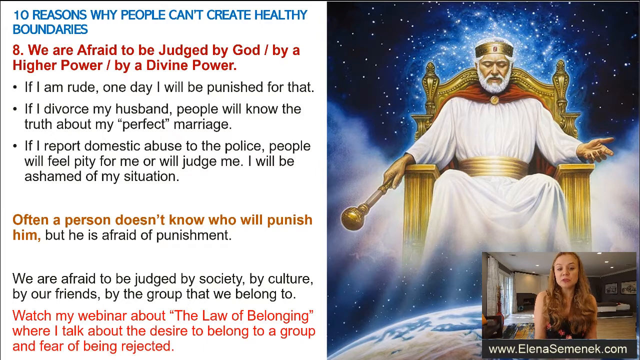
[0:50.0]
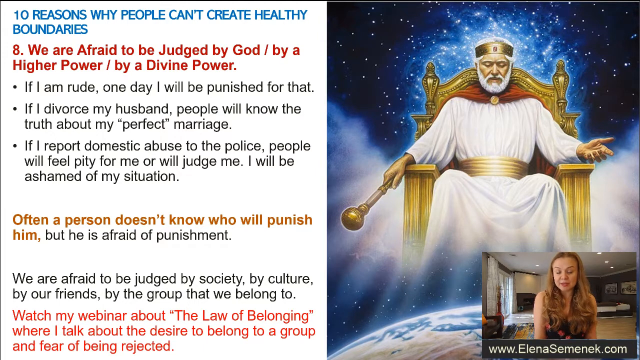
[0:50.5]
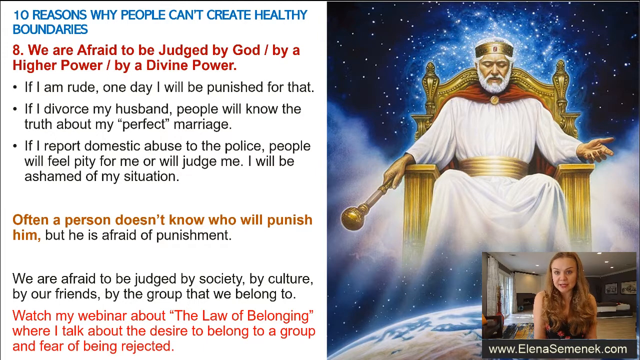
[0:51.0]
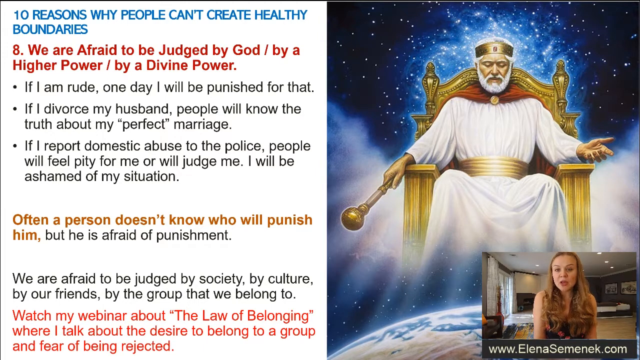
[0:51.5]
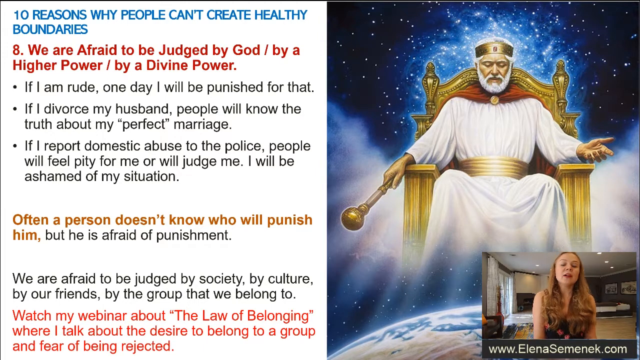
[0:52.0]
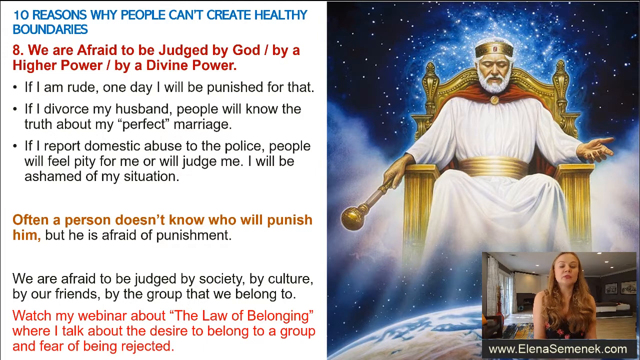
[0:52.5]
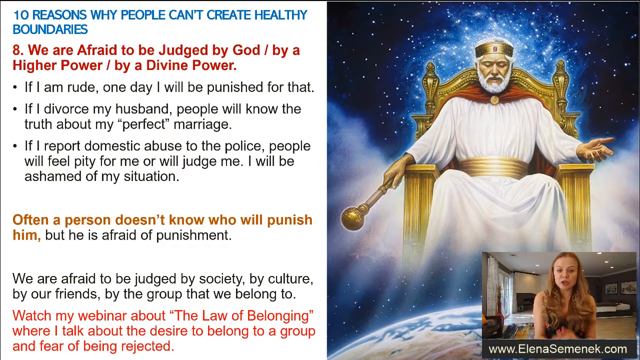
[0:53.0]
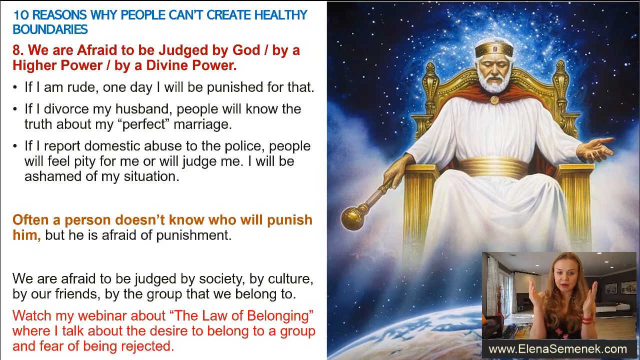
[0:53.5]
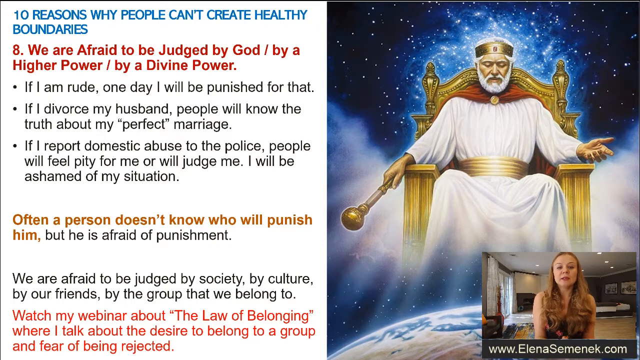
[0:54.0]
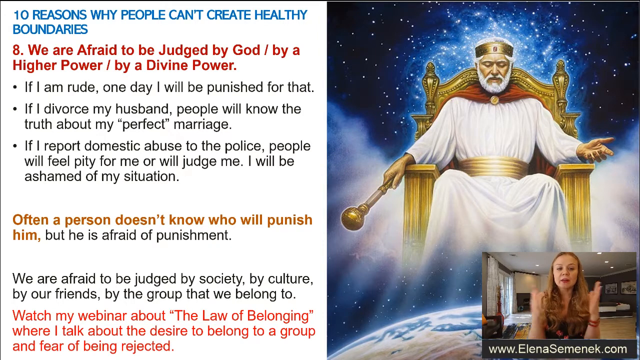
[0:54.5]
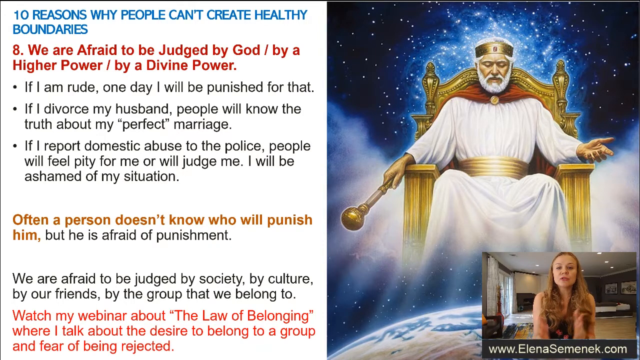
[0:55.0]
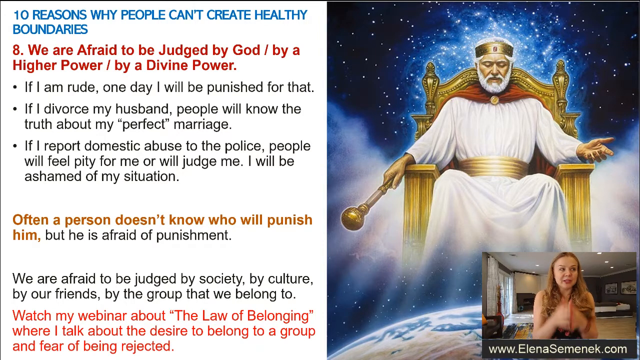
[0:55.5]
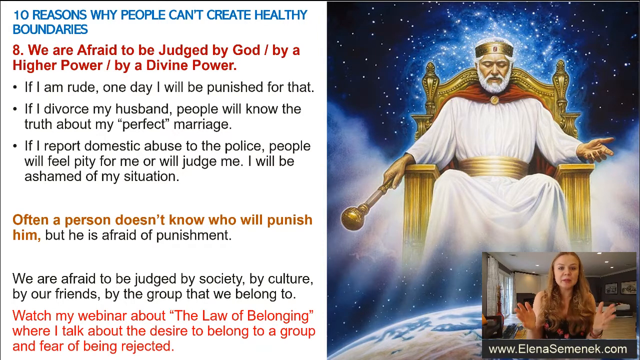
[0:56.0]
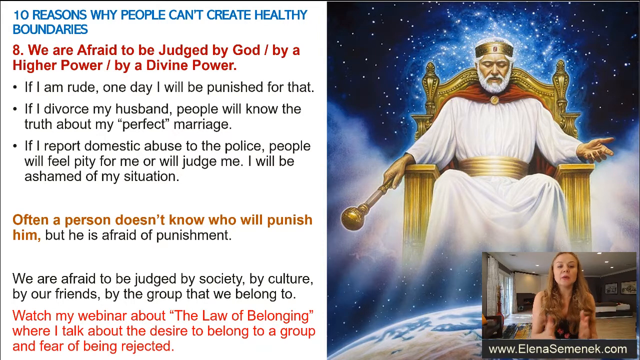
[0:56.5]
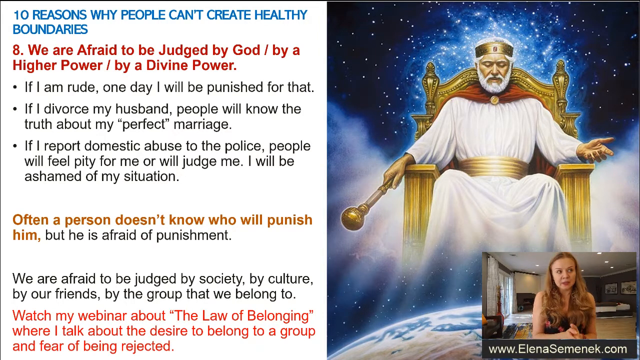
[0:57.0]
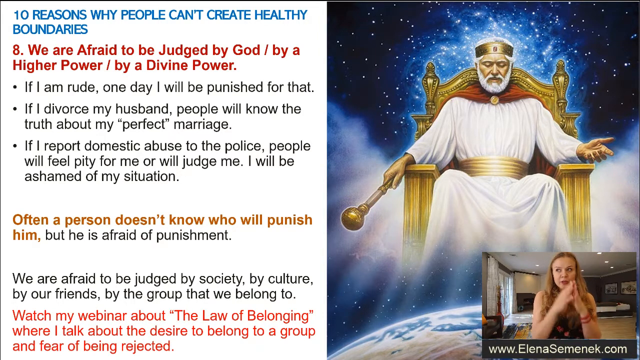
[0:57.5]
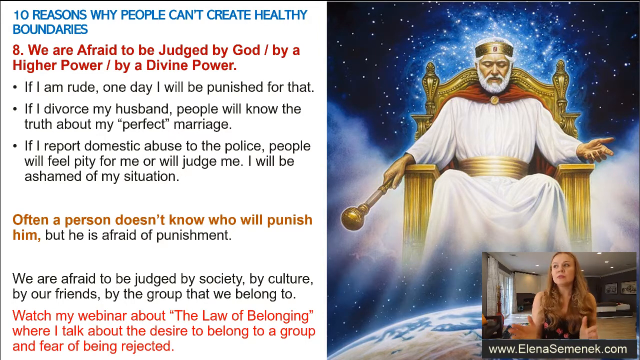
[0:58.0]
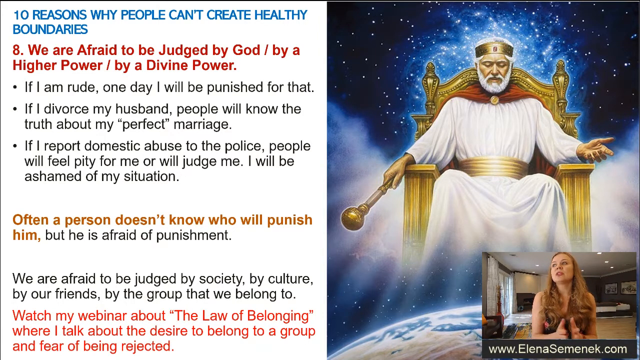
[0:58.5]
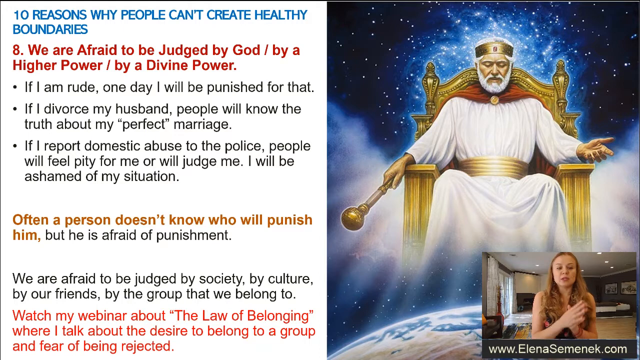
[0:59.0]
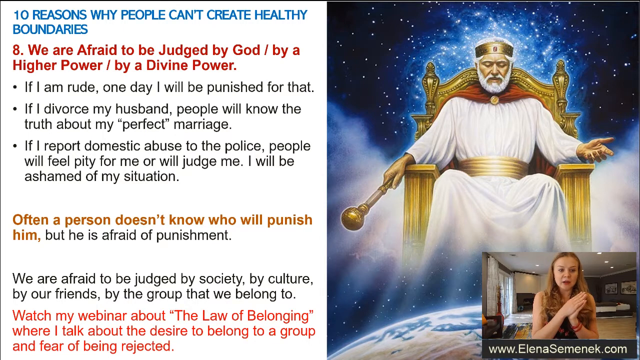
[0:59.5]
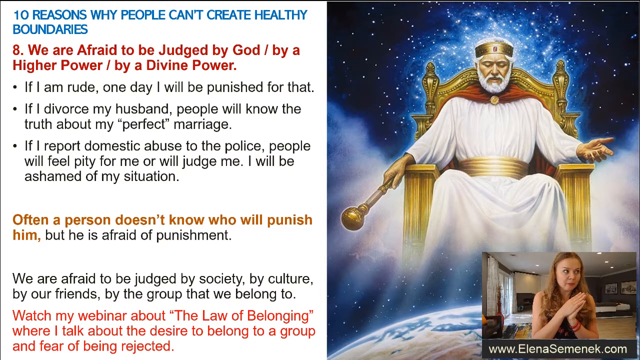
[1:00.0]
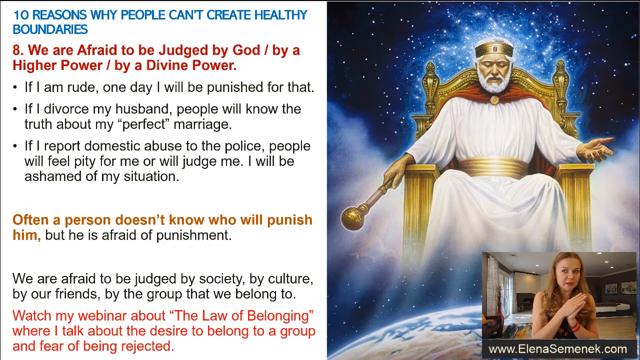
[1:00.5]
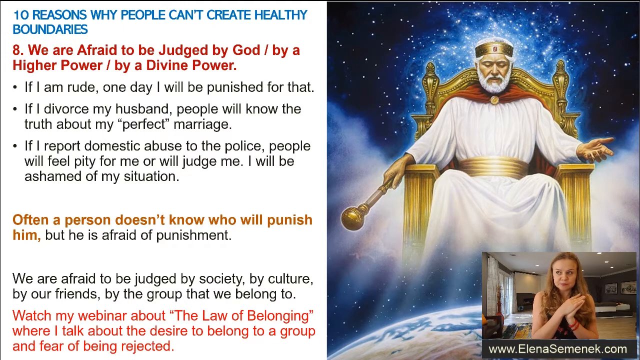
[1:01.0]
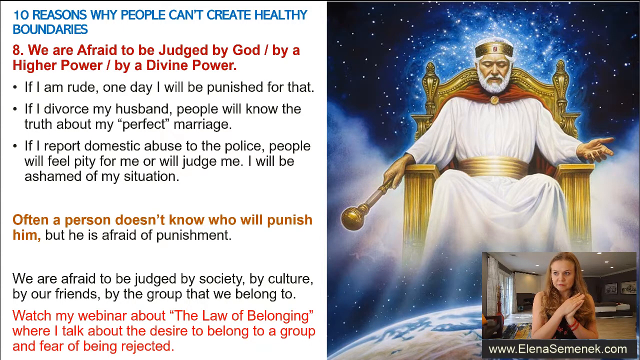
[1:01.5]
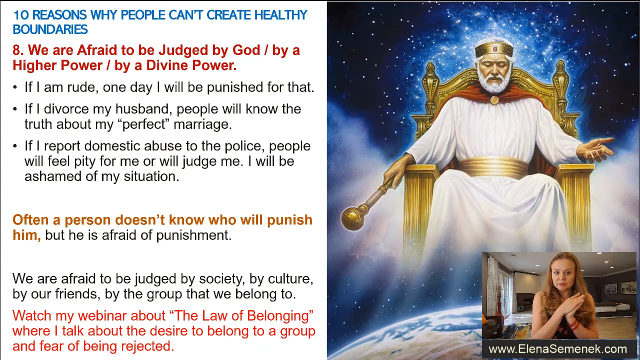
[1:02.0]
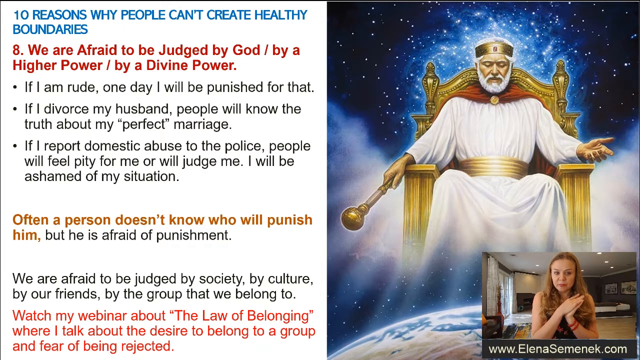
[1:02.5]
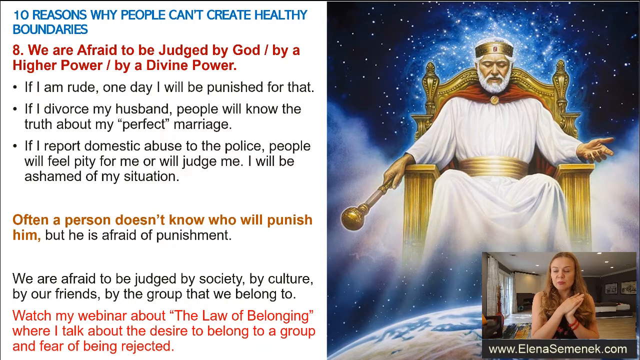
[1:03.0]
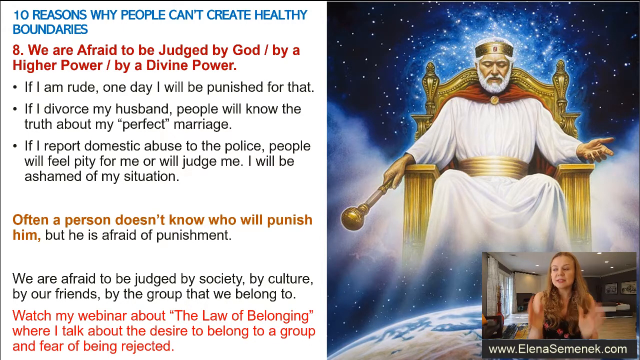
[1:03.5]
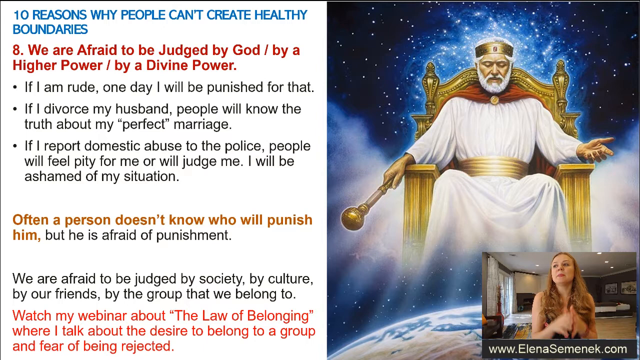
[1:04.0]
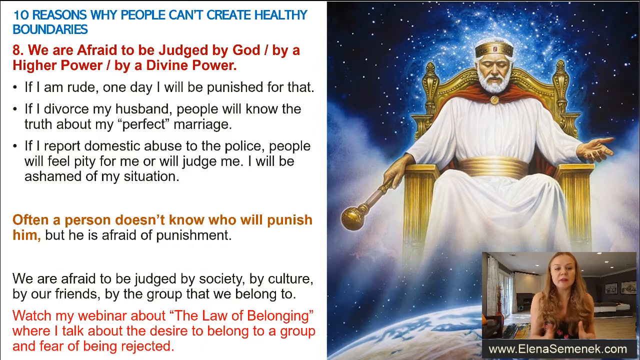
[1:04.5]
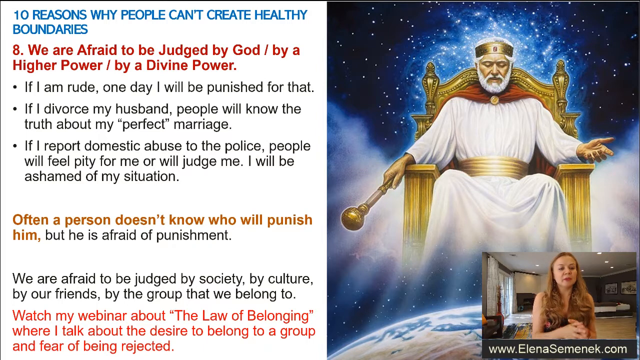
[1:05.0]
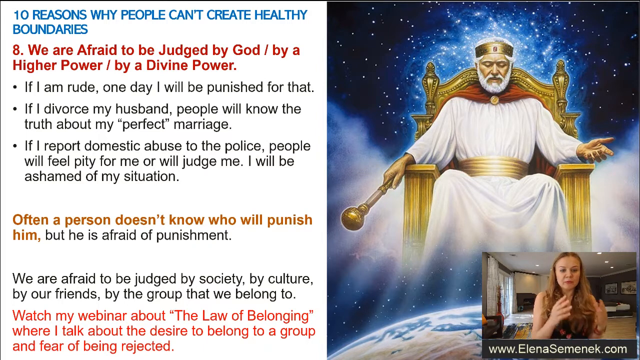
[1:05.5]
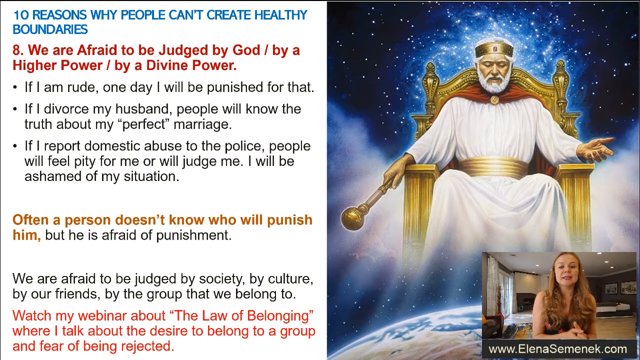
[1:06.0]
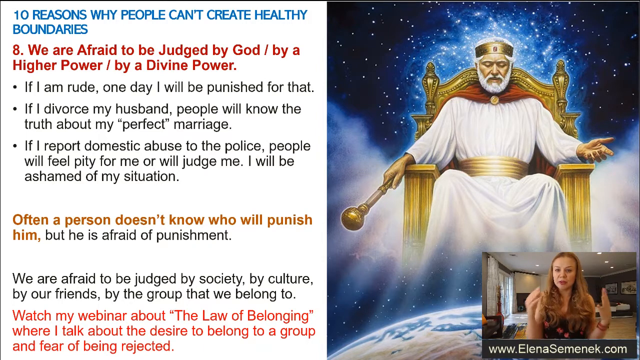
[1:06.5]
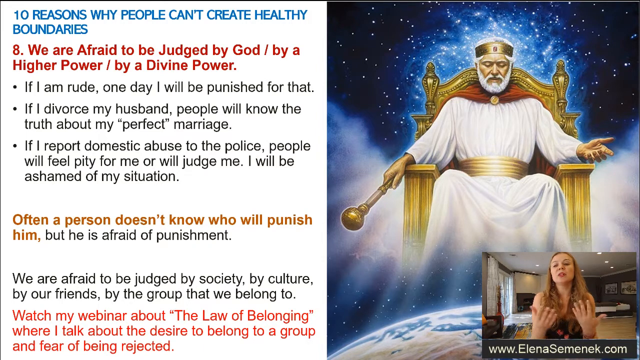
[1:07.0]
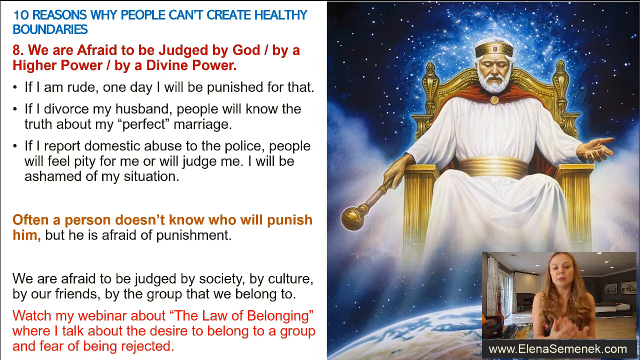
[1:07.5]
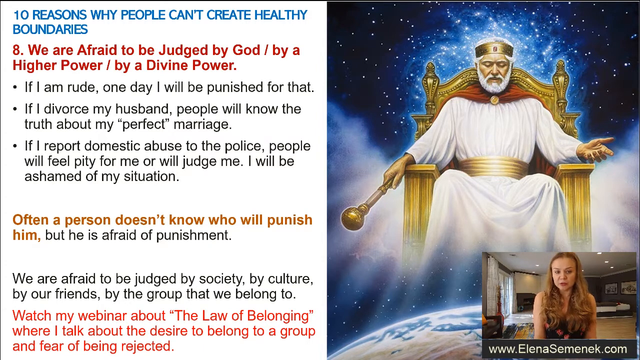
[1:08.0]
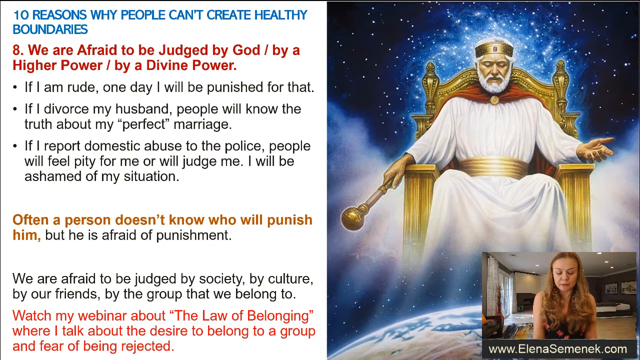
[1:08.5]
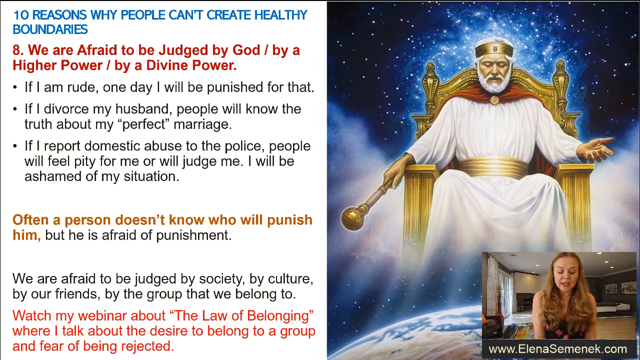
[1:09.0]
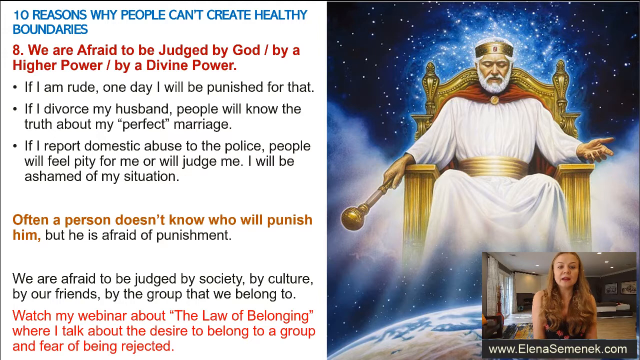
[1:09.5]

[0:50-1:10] In the corner of the screen is a smaller video screen showing a blonde-haired woman in a black tank top with red and orange designs on the front, speaking directly to the camera. Along the bottom of that video it says "www.elanaseminic.com". The left half of the screen is nothing but writing, and the right half, above her, is a picture: a digital image of a large golden throne. On the throne sits a man in a white robe with a gold belt, holding a golden sphere in his right hand and wearing a golden crown. The top of a red cape is visible on him. Behind him are outer space, darkness and stars. The left side of the screen is white and reads: "Ten reasons why people can't create healthy boundaries. We are afraid to be judged by God, by a higher power, by a divine power. If I am rude, one day I will be punished for that. If I divorce my husband, people will know the truth about my perfect marriage. If I report domestic abuse to the police, people will feel pity for me or will judge me. I will be ashamed of my situation. Often a person doesn't know who will punish him, but he's afraid of punishment. We are afraid to be judged by society, by culture, by our friends, by the group that we belong to." Underneath, in red, it says "watch my webinar about the law of belonging where I talk about the desire to belong to a group".